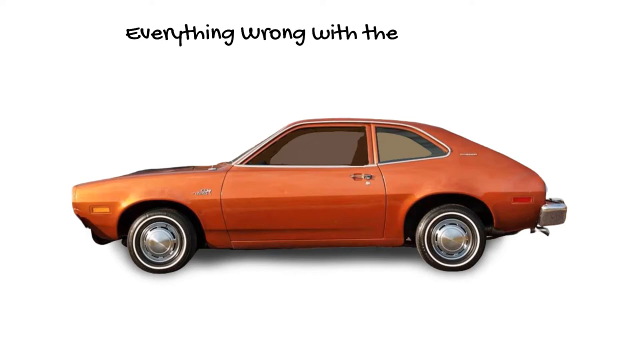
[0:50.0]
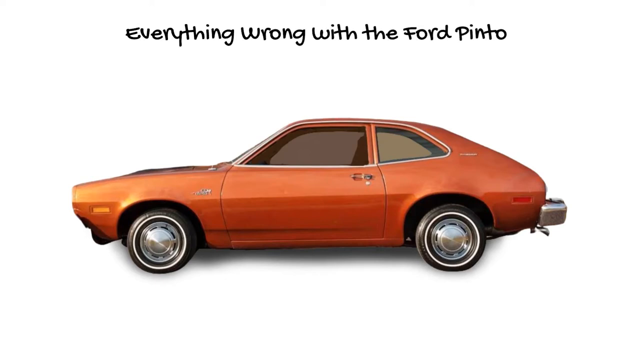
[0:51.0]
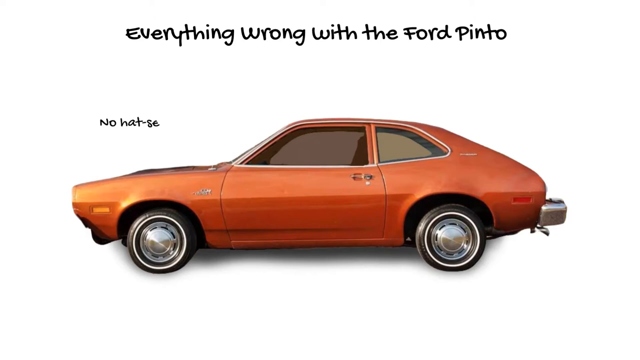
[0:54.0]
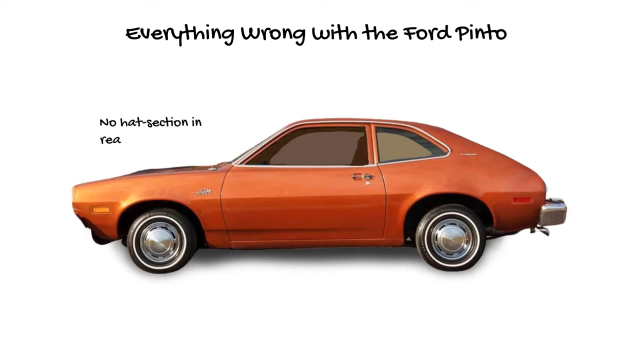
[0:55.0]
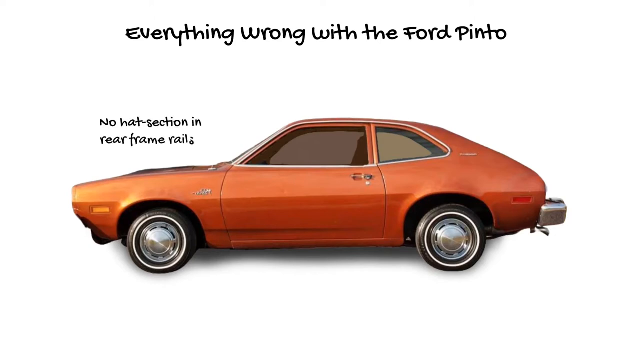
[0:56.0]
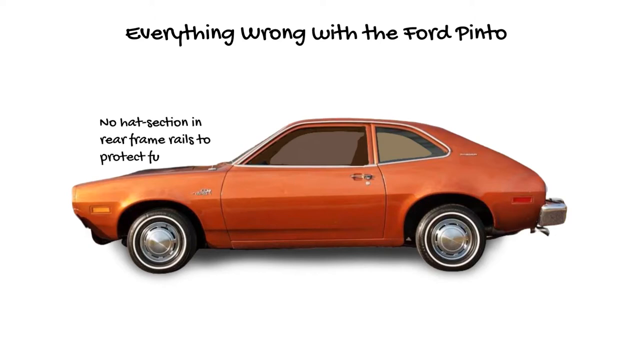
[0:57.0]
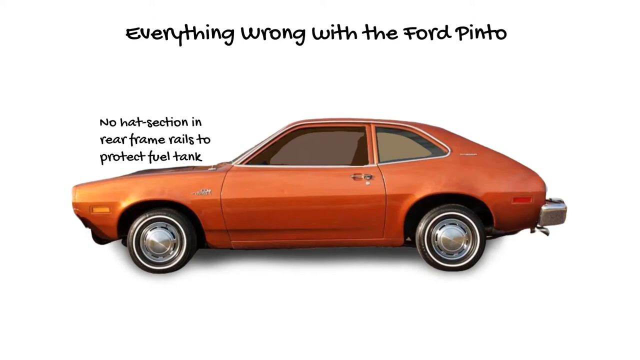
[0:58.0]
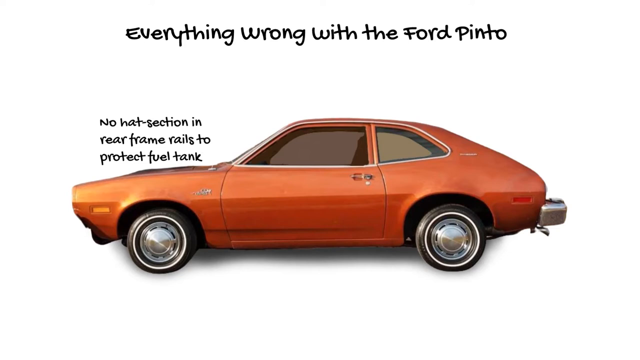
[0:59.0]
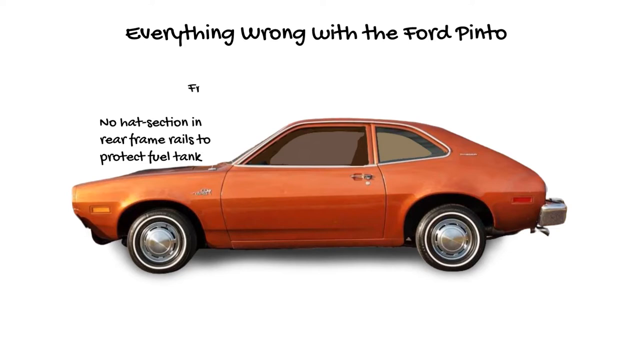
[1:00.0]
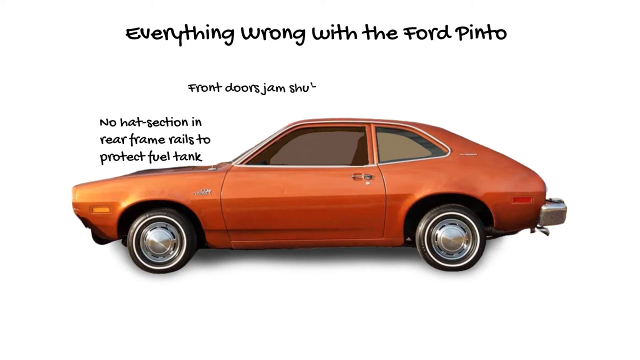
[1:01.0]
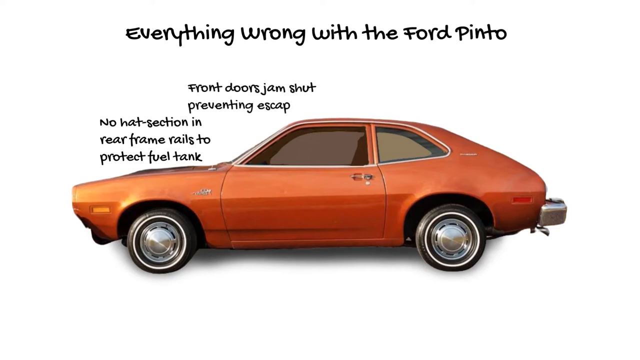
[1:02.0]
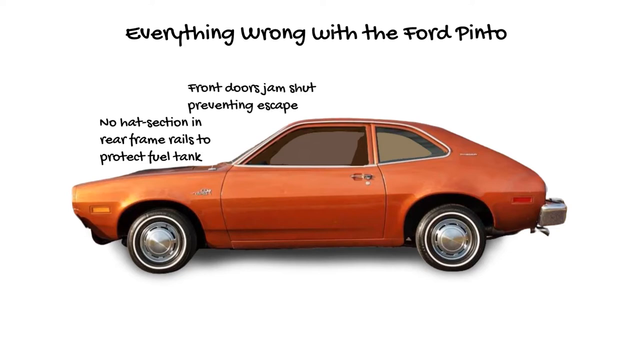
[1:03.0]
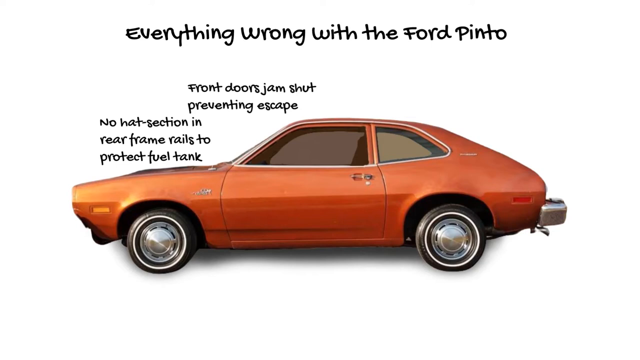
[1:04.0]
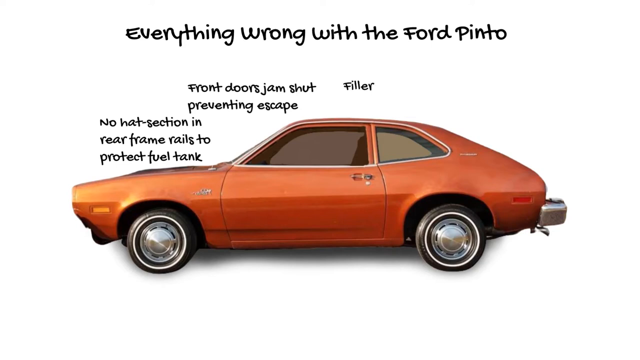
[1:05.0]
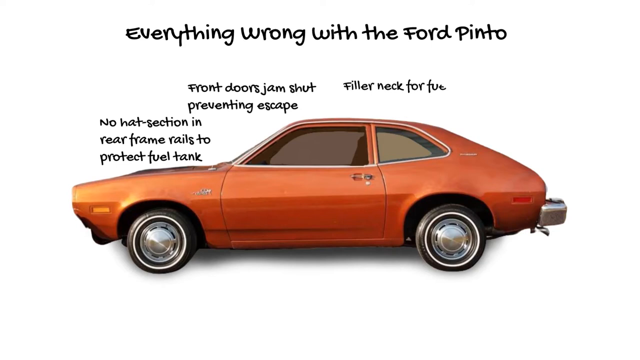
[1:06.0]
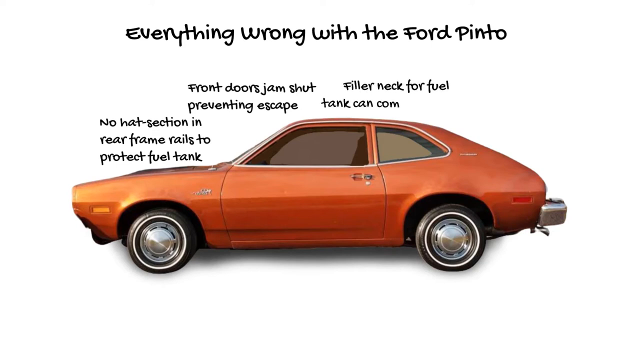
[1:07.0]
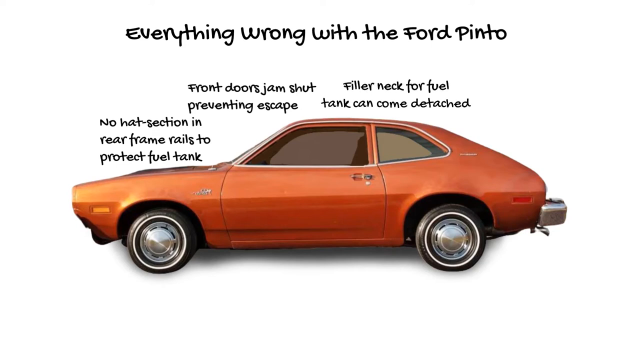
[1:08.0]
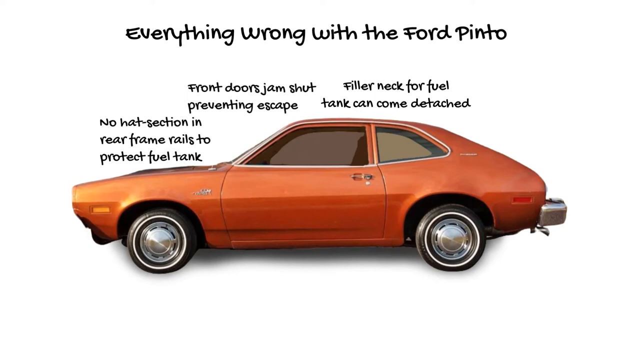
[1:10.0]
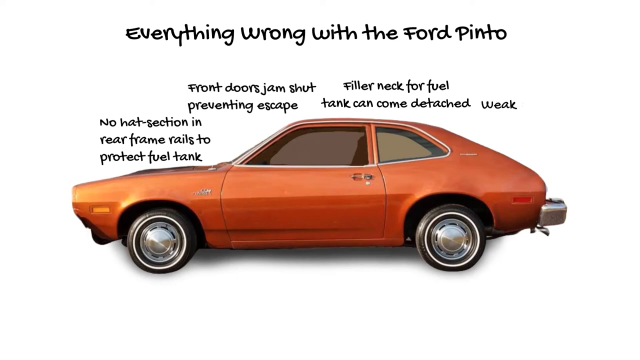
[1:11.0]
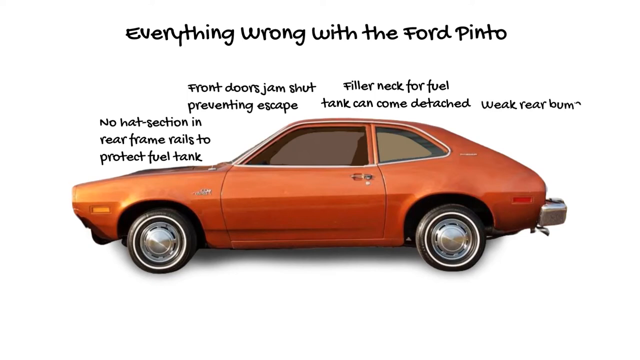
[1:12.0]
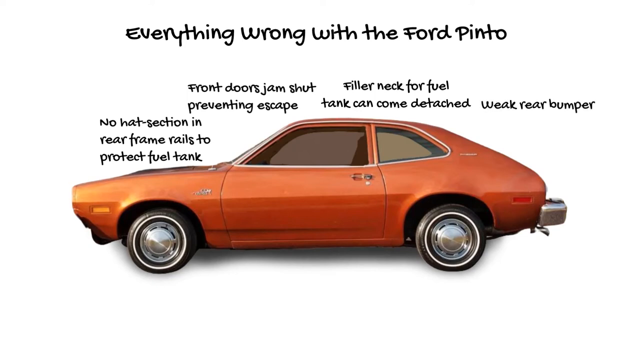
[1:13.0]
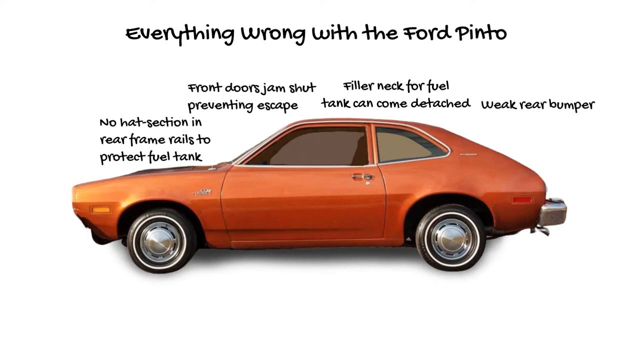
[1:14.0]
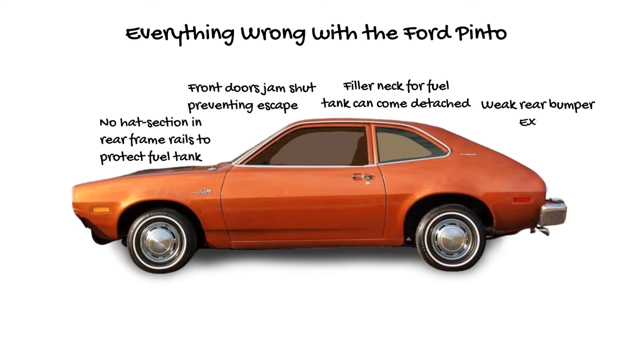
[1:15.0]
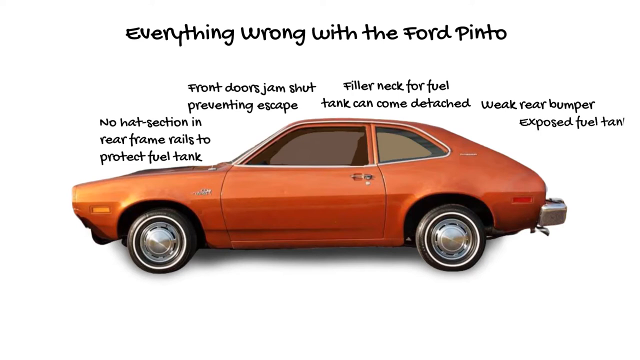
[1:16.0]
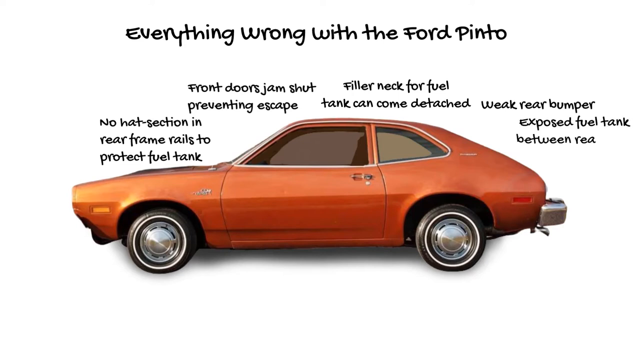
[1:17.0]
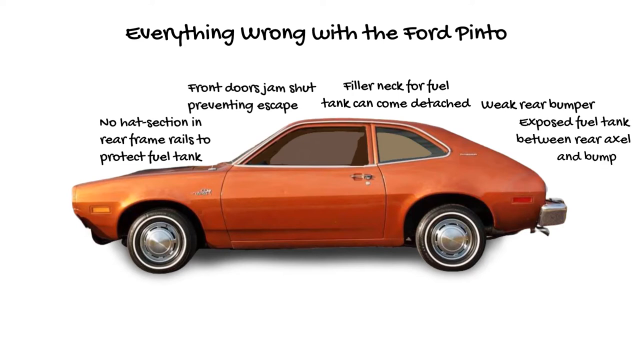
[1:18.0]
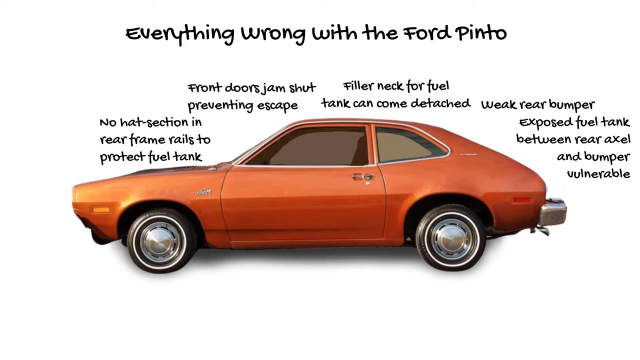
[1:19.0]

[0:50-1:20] A white screen shows the words "everything wrong with the Ford Pinto" in black across the top. "Everything wrong with the" is already on screen, and then "Ford Pinto" pops up one word at a time. Below the title is an orange Ford Pinto, seen from the driver's side. A metal bumper and a side light on the rear end are visible. It is a two-door car, with front and back driver's side tires that have silver metal hubcaps and are white long tires. There is a window for the backseat but no door for it, and the front driver's side quarter panel is visible.